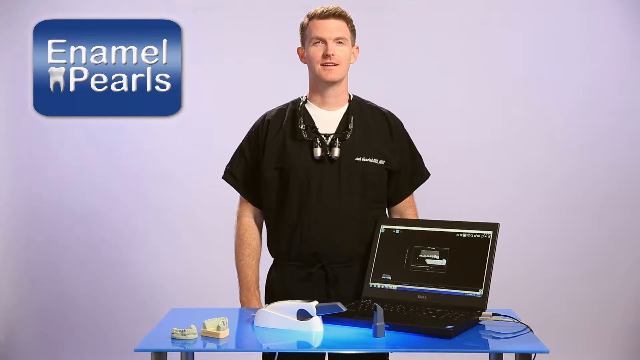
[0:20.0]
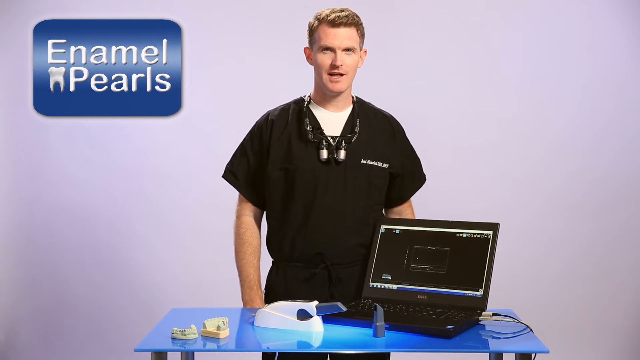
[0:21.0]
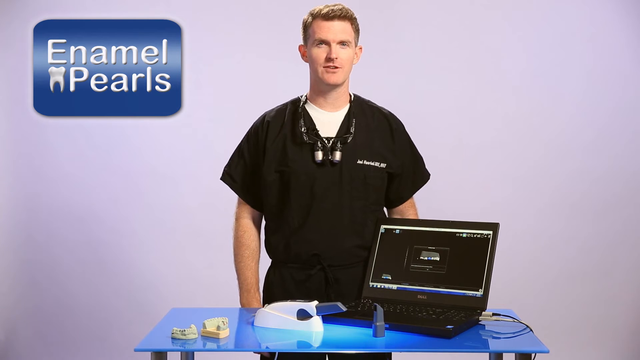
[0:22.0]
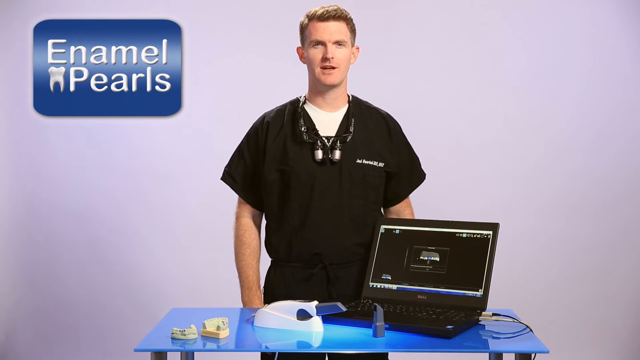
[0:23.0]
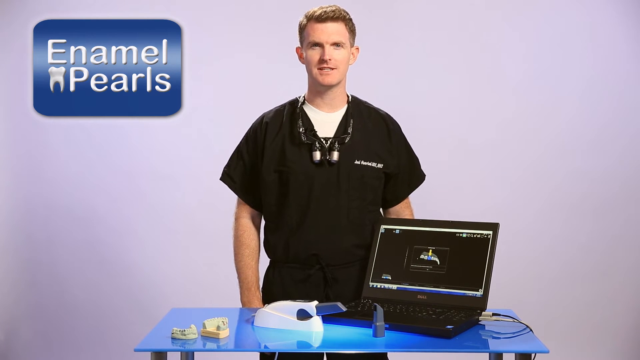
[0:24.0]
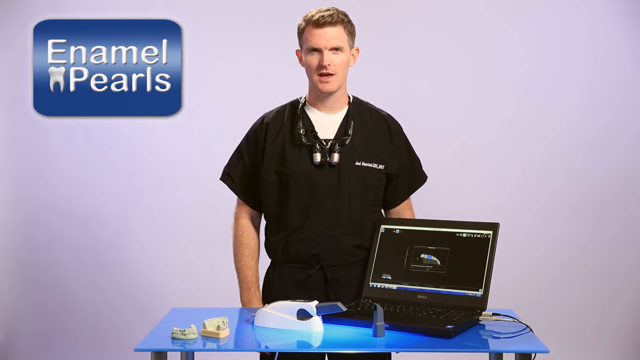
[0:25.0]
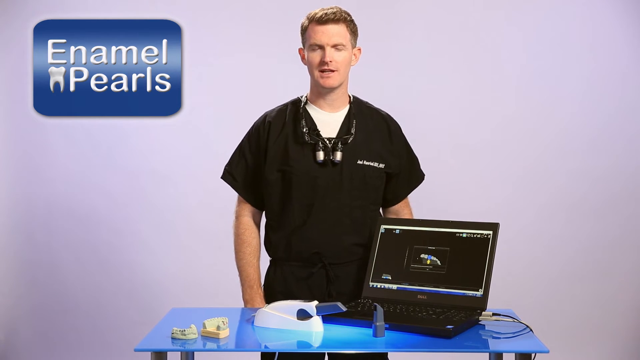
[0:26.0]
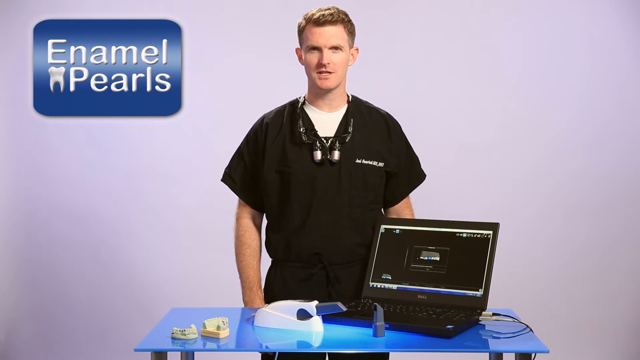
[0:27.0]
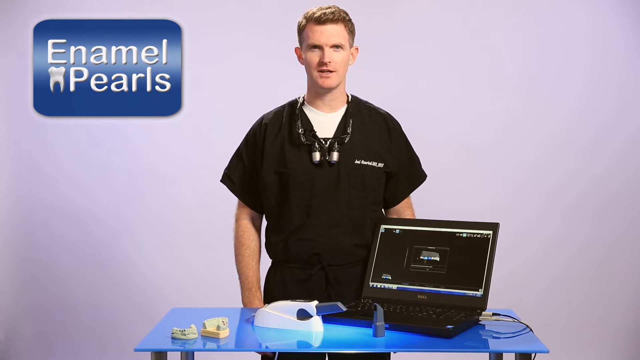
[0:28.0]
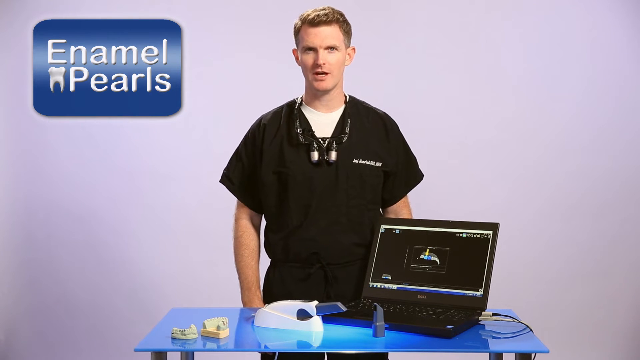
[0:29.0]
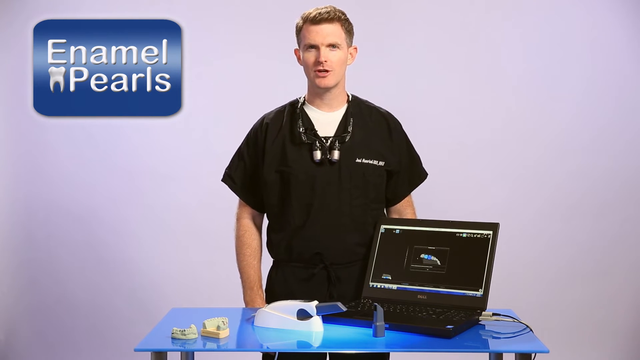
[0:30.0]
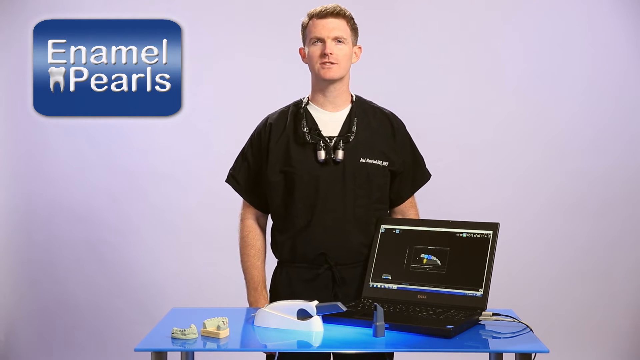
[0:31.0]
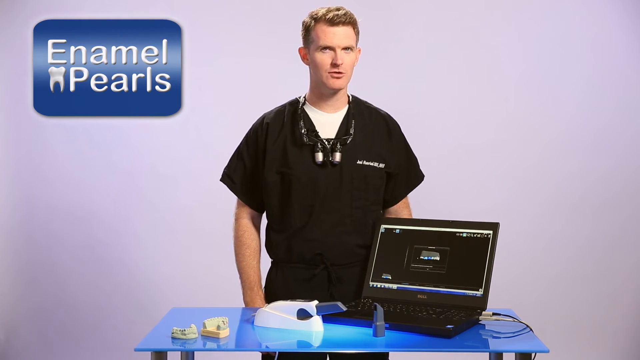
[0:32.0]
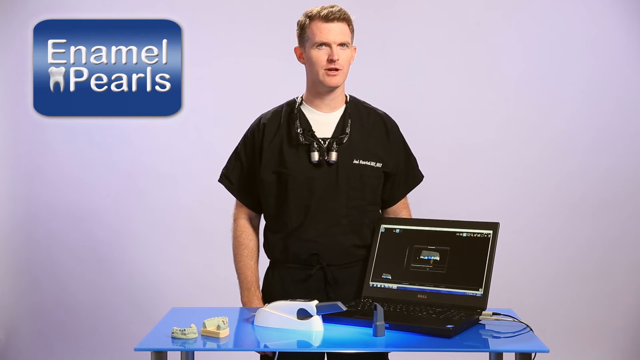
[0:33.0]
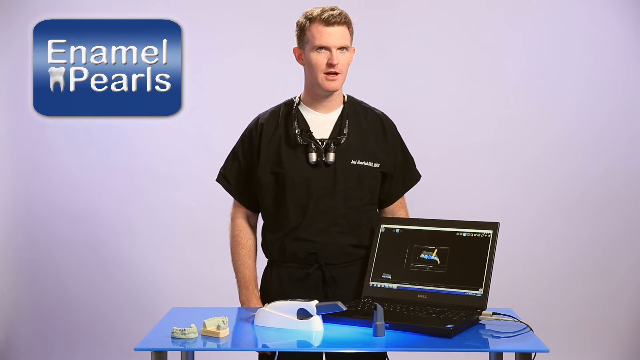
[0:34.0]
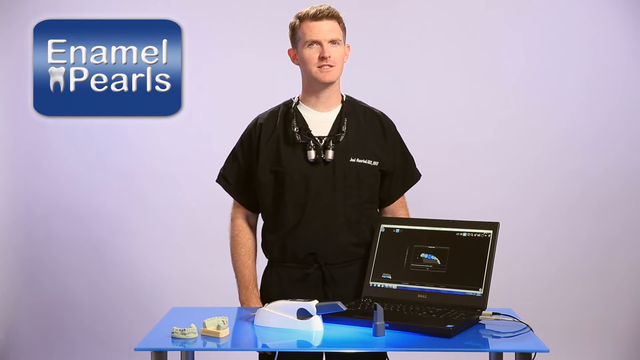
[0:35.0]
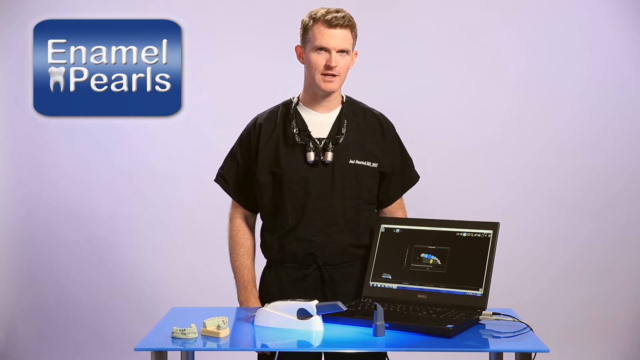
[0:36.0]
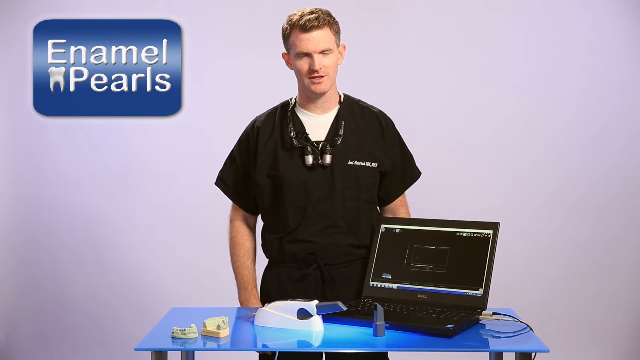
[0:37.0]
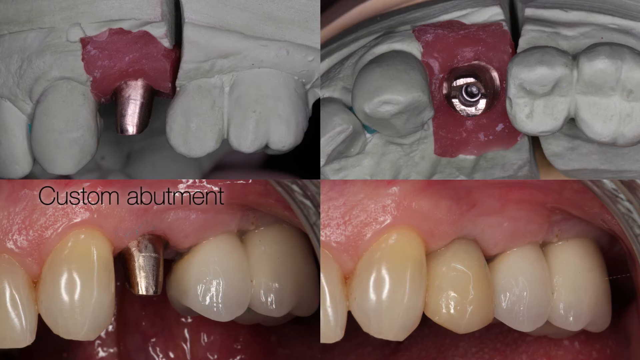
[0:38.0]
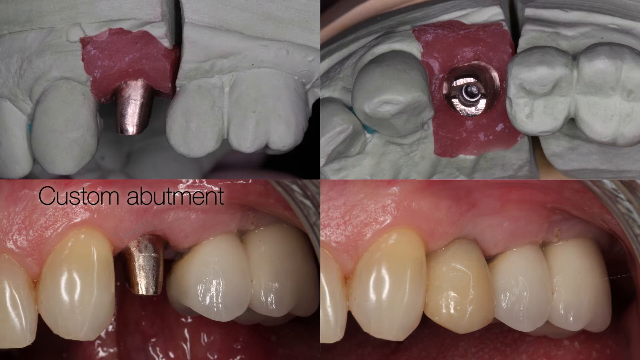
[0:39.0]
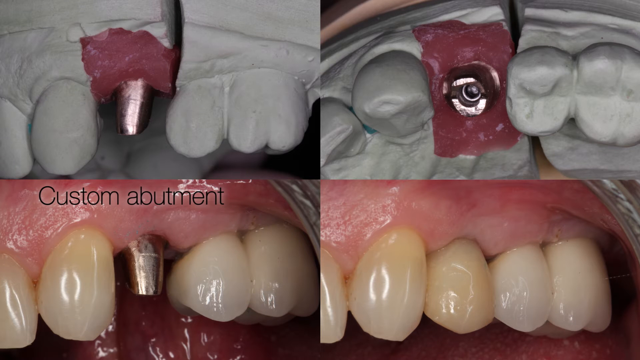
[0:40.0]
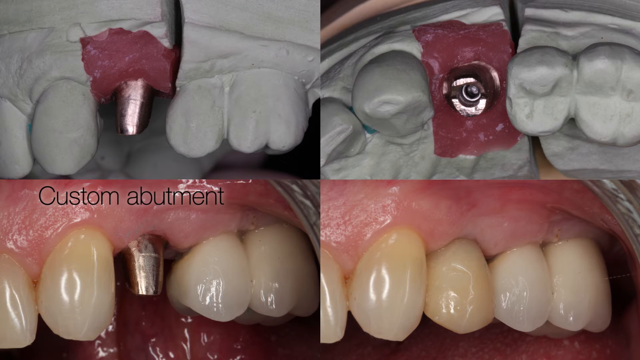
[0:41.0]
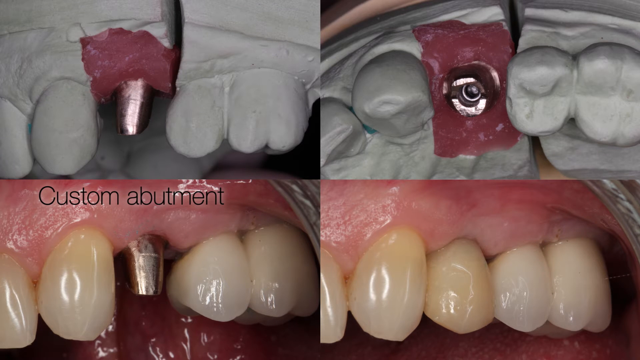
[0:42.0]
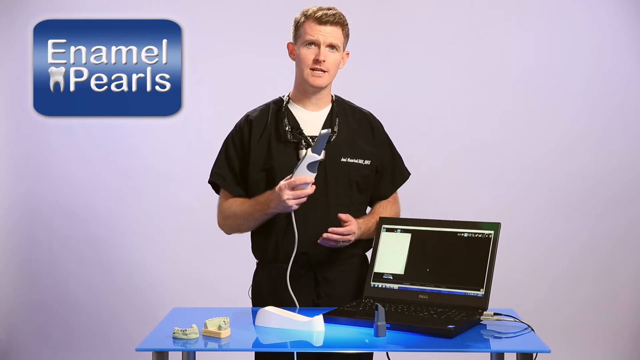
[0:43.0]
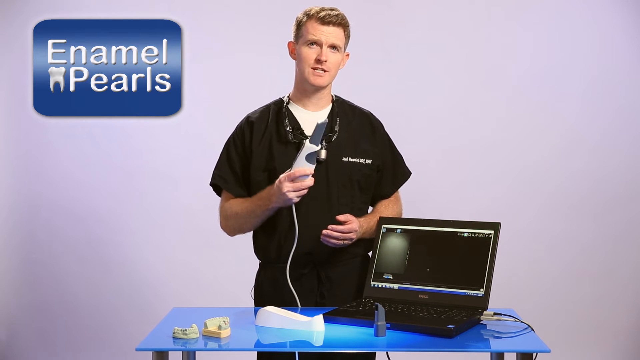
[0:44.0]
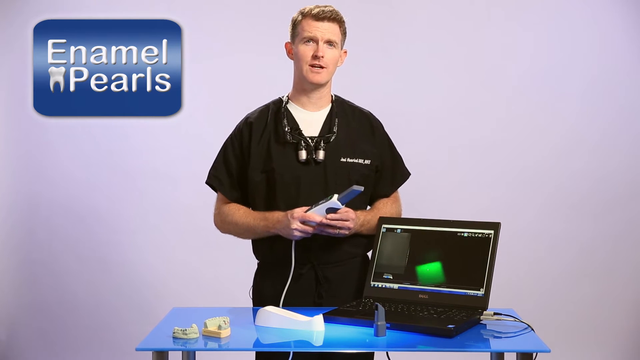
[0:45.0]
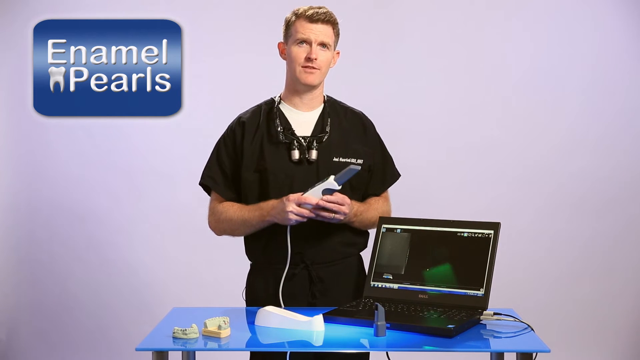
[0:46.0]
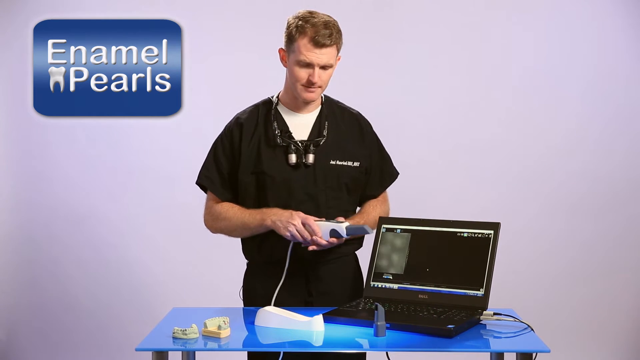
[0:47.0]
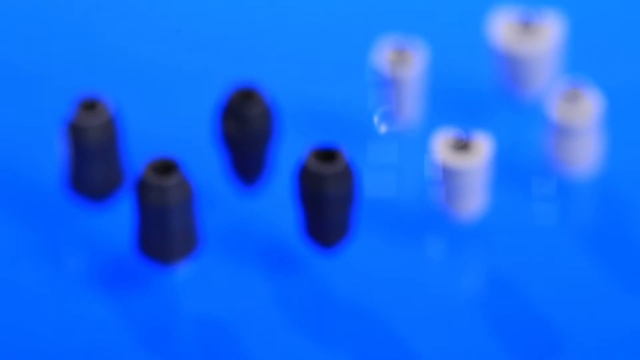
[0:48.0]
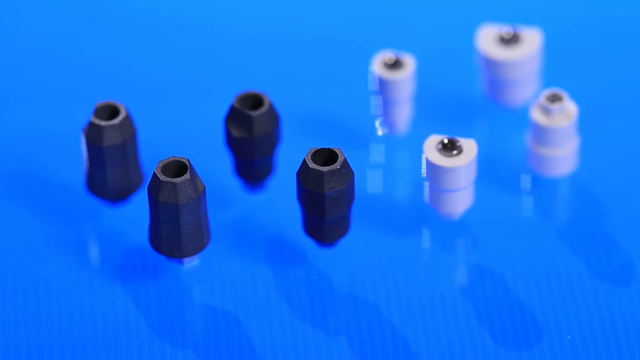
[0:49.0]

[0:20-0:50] The person who looks to be the dentist stands in the middle of the screen wearing black scrubs, with a medical device around their neck. At the top left of the screen is the text "enamel". In front of the person, a laptop computer is on a glass desk, with multiple devices next to it; the laptop is on and has something on its screen. The person, who has short brown hair, speaks to the camera. The video cuts to a shot of apparently four different angles that look like the insides of mouths, with gray teeth shown; there are crowns on these teeth, or at least on one of the teeth, in the images, and one of them says "custom abutment". All the shots are very close-up angles of teeth in a human mouth. The video cuts back to the dentist, who apparently has in his hands one of the devices, which has a wire on it.